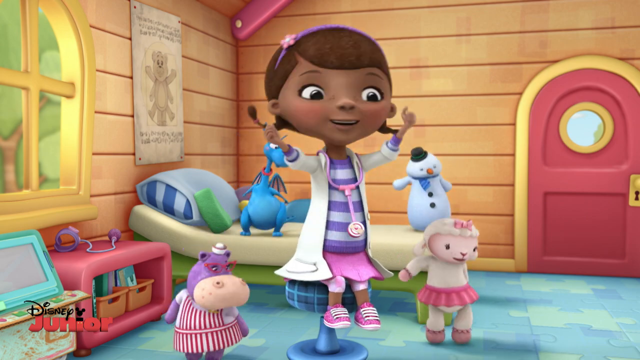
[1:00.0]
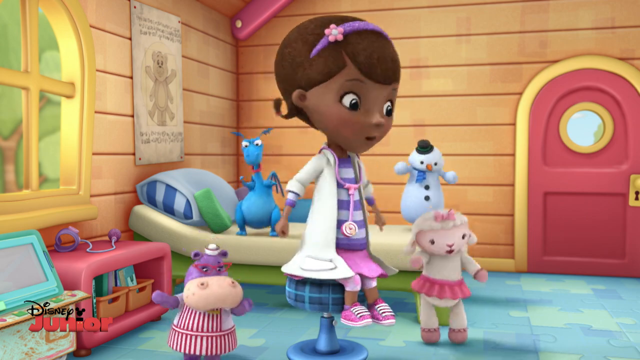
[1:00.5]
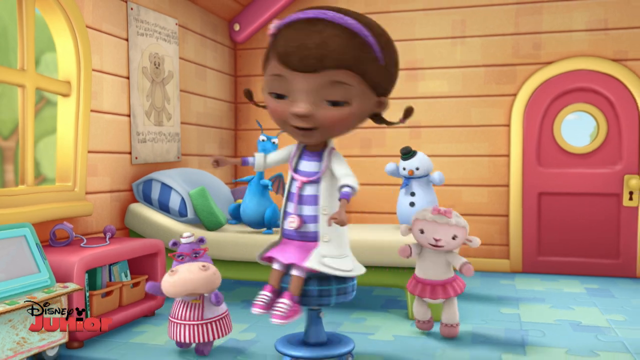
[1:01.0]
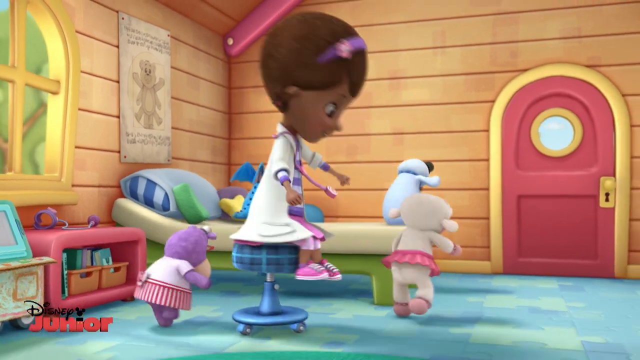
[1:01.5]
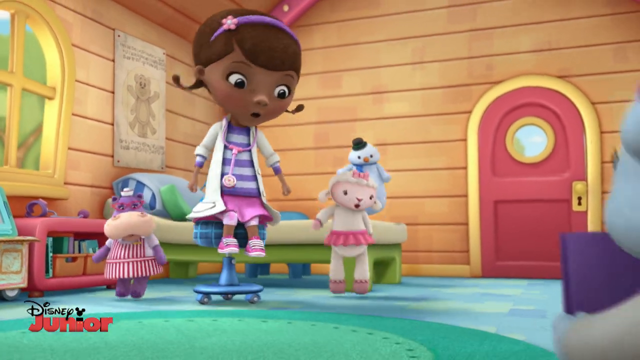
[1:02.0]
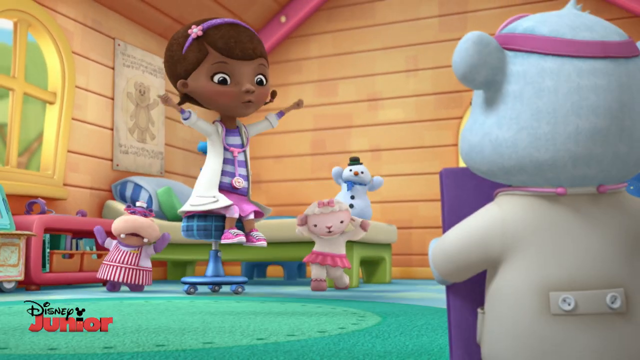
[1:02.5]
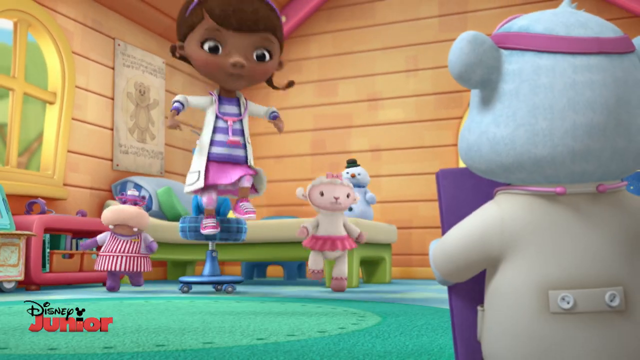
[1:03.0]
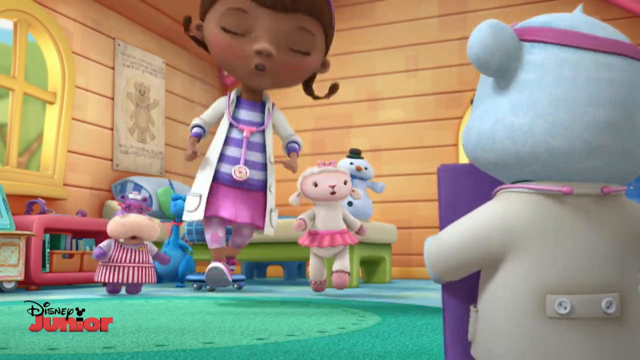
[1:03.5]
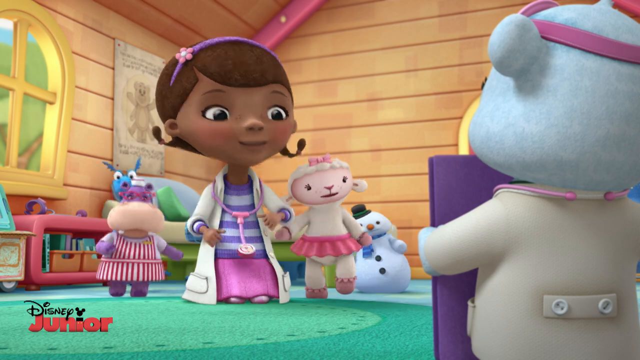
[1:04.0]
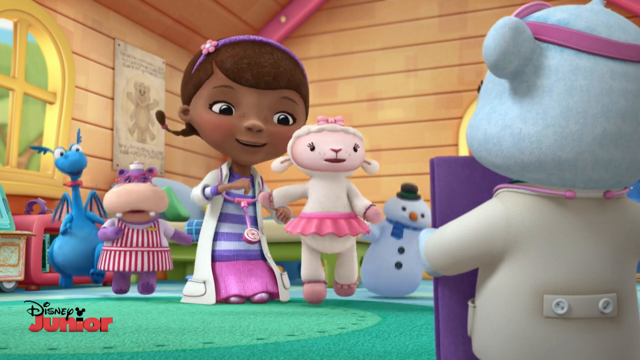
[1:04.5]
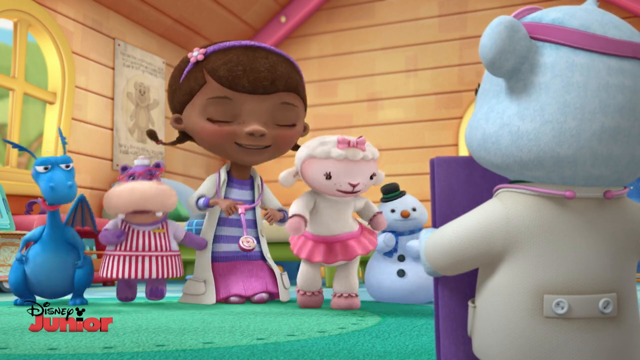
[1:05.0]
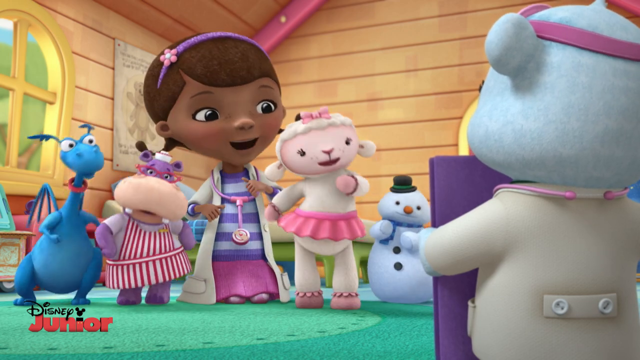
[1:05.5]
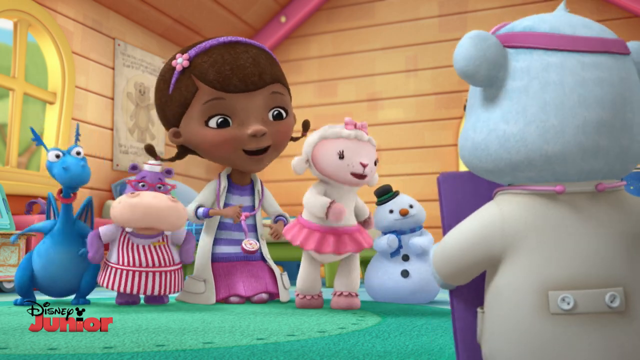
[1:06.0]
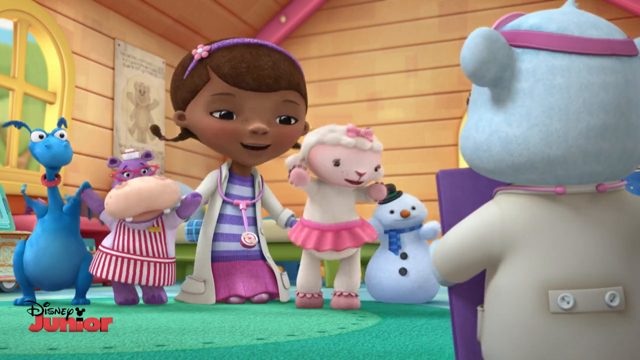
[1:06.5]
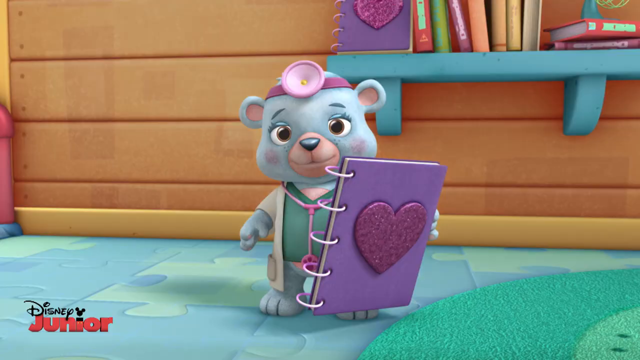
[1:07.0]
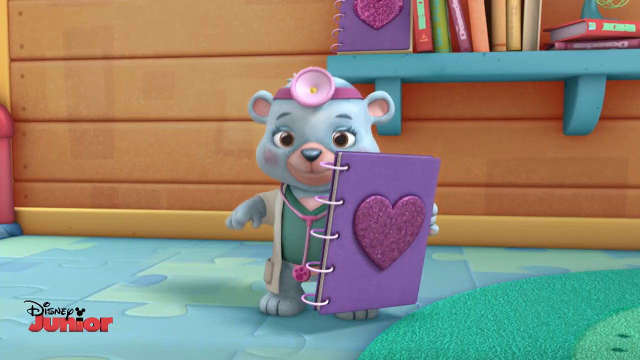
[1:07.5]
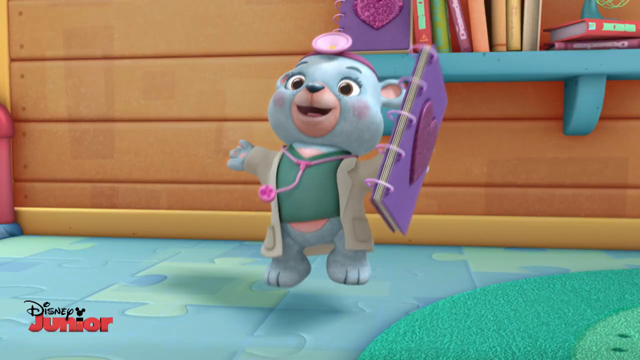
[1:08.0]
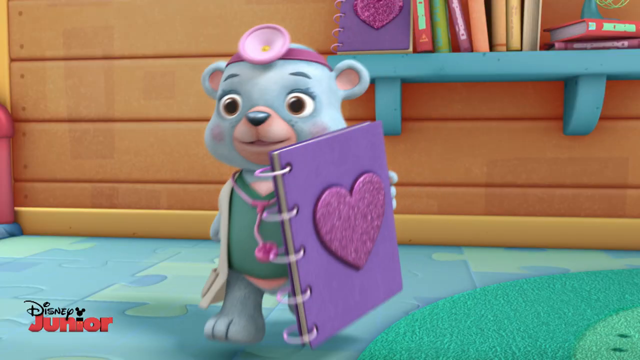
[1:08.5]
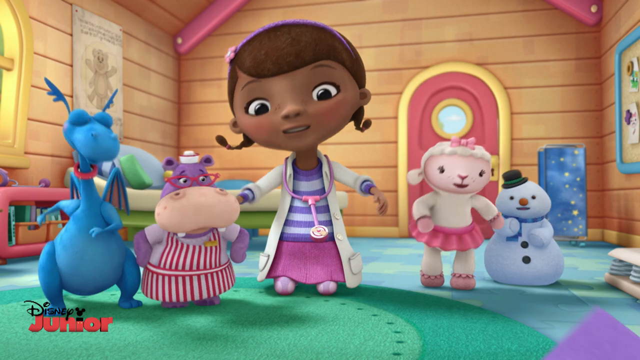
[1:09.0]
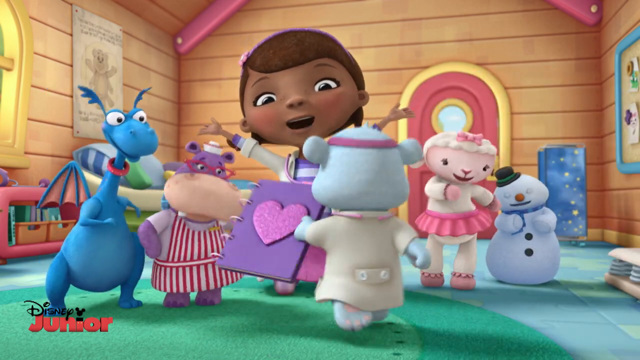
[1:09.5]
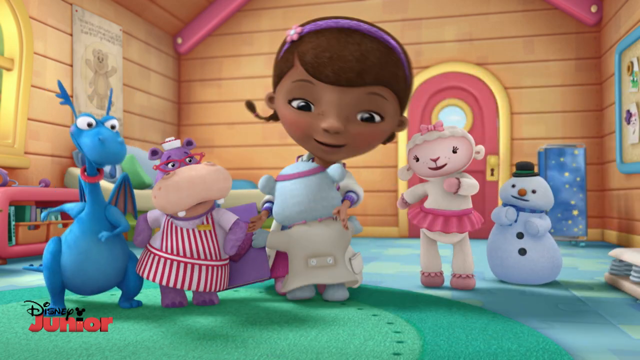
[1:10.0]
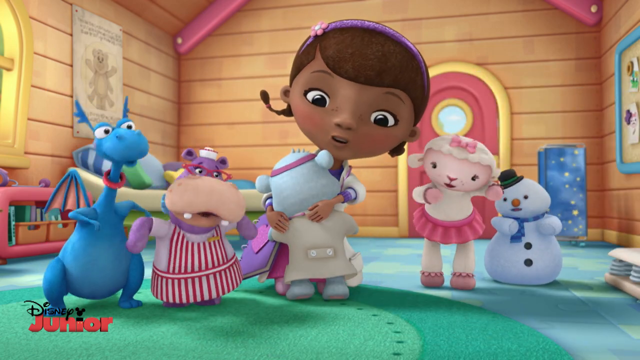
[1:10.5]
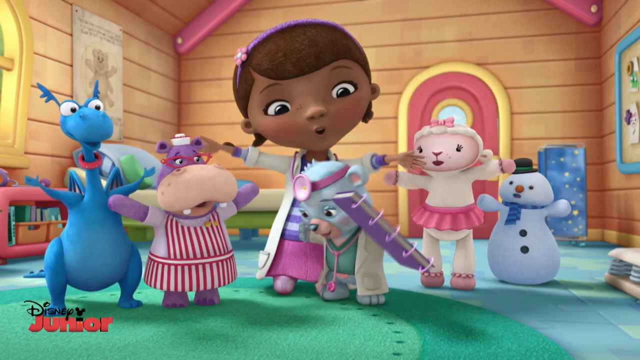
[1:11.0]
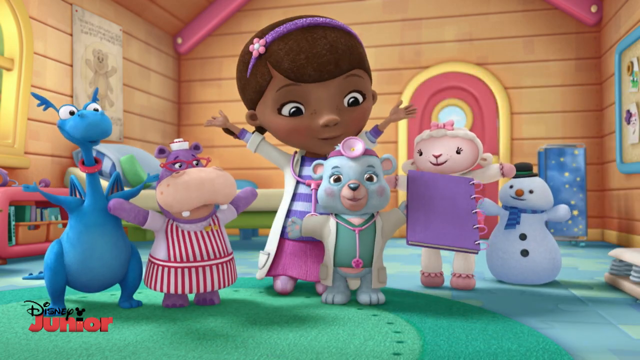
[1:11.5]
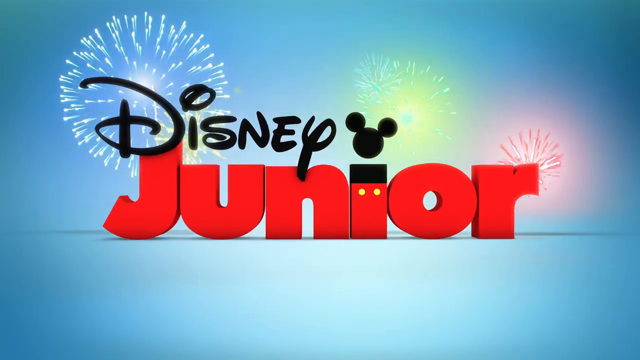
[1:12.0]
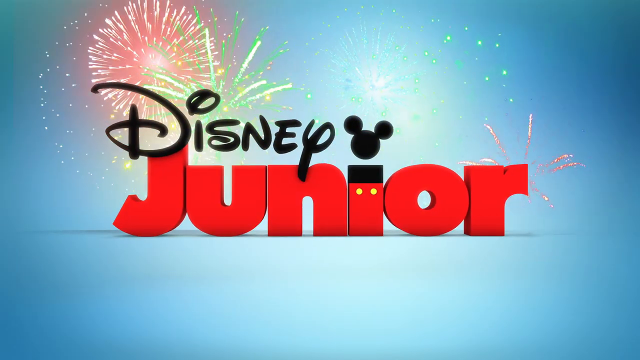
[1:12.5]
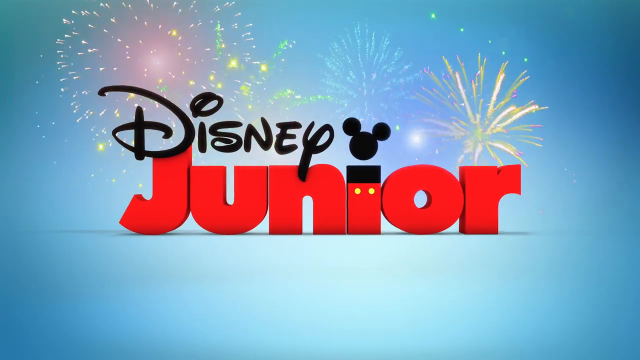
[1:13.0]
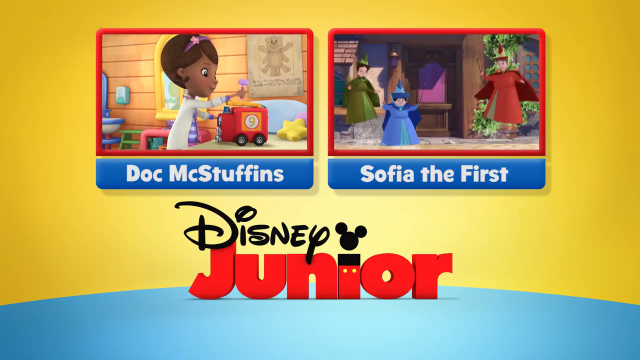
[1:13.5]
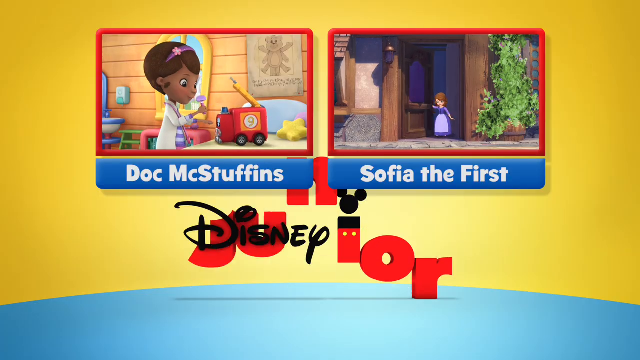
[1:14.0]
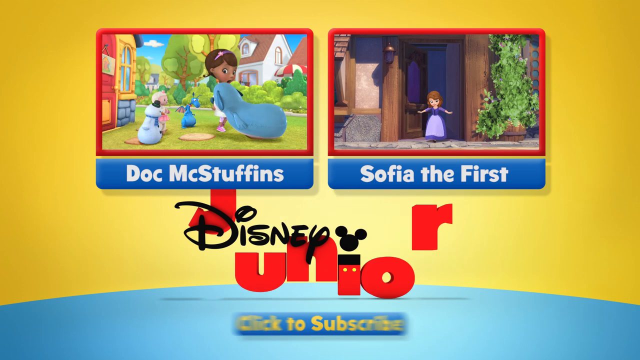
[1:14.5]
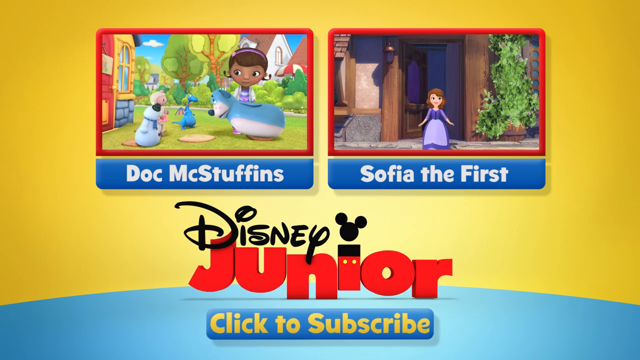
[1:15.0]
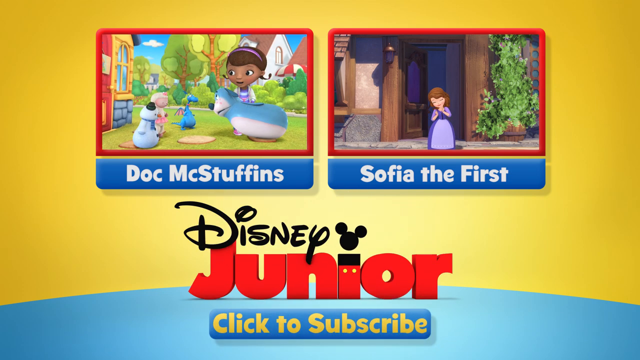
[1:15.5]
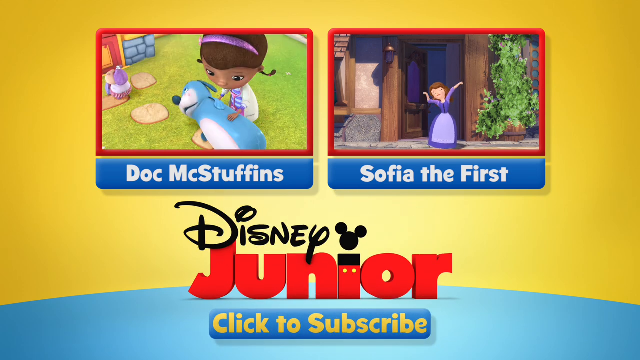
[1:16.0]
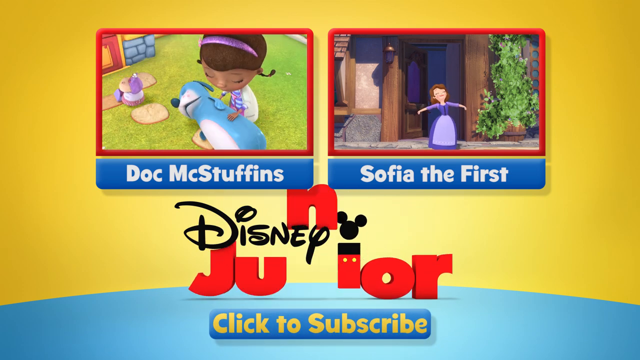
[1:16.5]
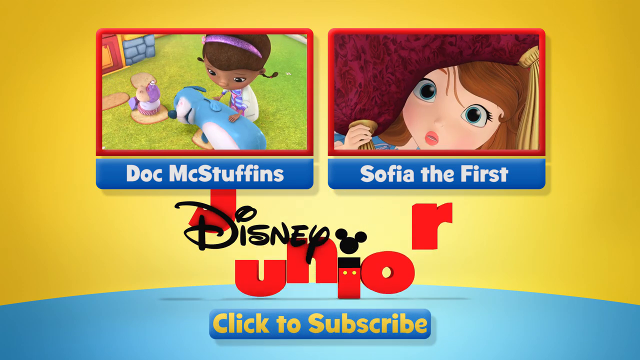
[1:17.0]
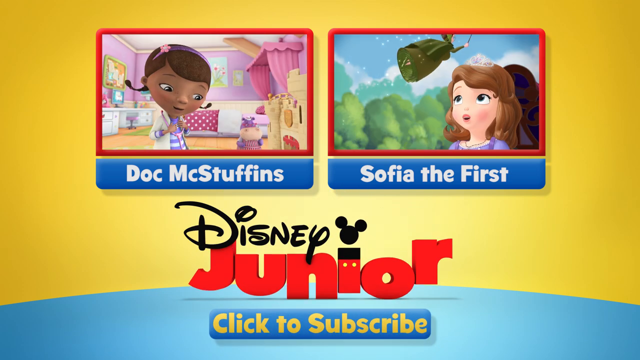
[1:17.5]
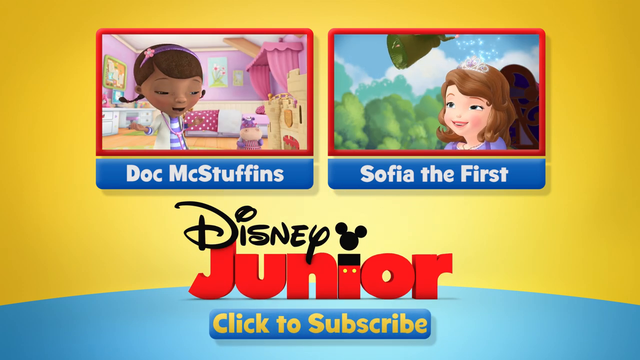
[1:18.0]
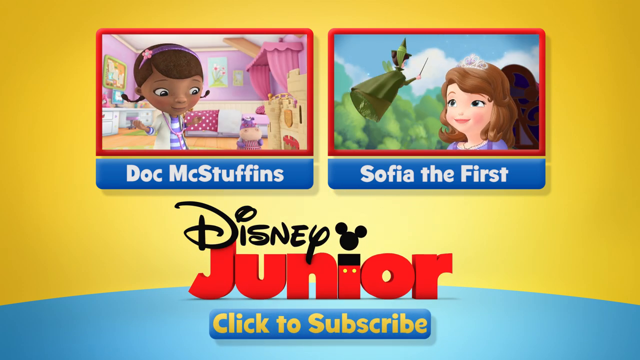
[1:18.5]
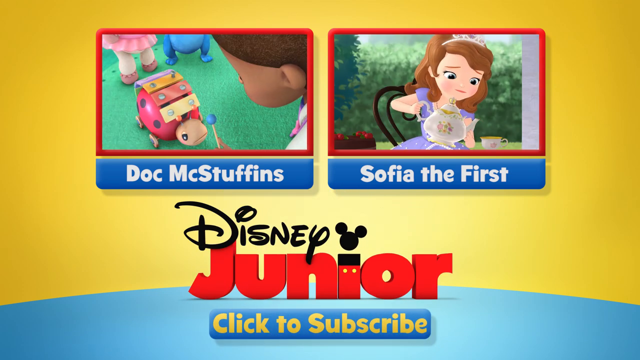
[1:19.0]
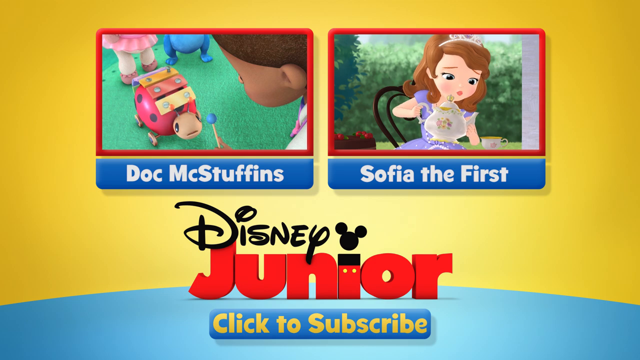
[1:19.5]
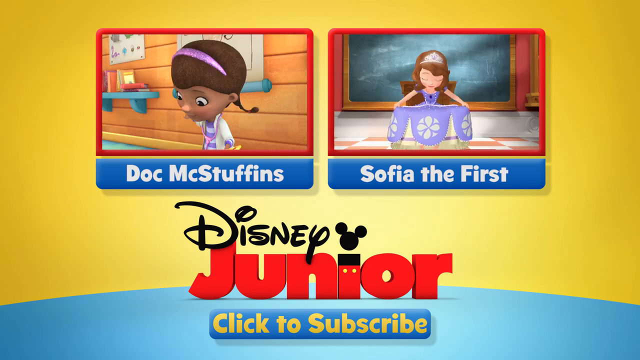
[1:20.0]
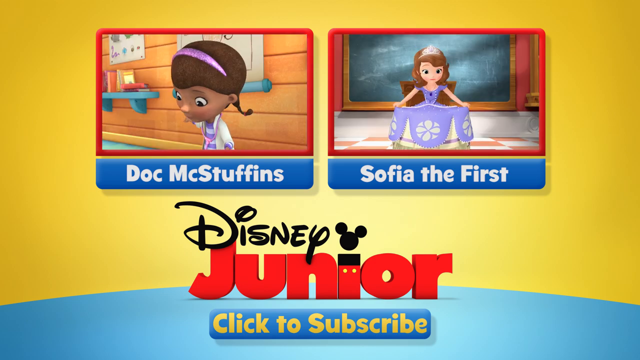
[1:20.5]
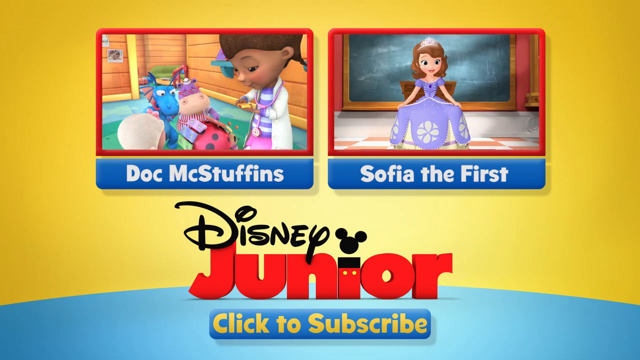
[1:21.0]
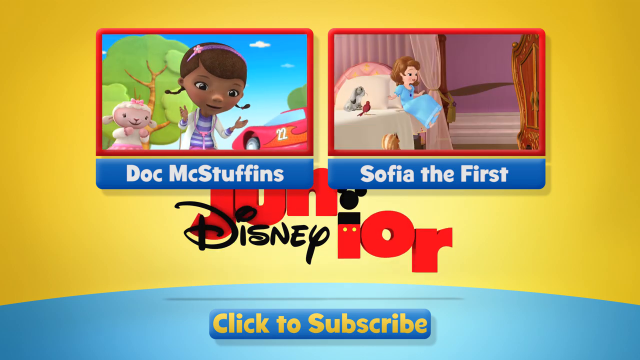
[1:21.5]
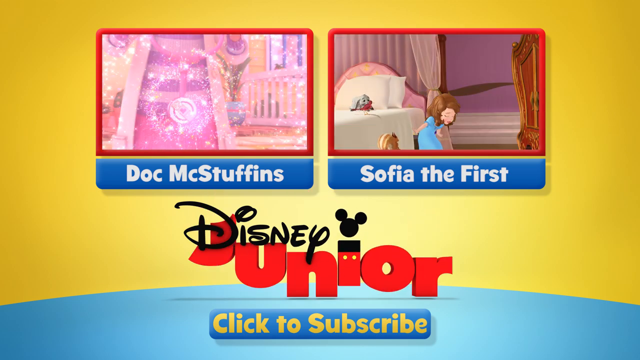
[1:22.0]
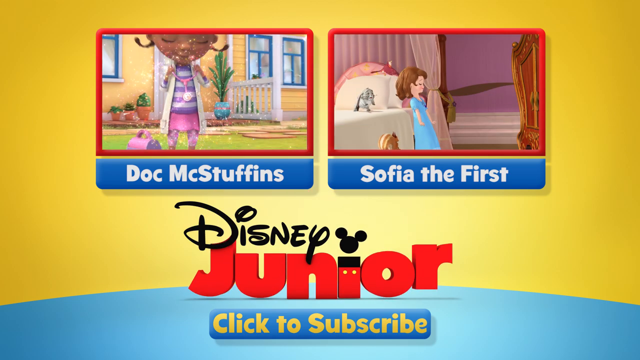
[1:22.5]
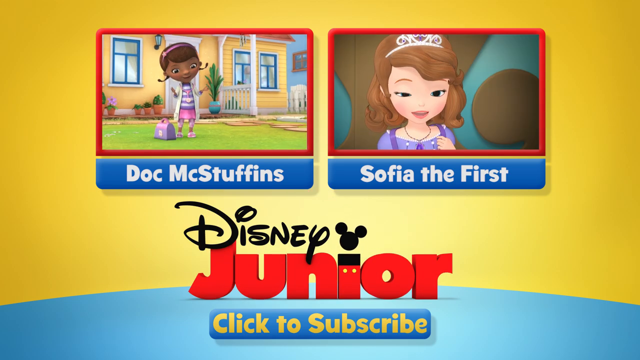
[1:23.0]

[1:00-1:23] She turns to the left as her arms swing back, spins to the right, lifts her arms, and swings them forward and then out to the side. She hops to the ground and gets on her knees facing the doctor, who carries the purple heart notebook. The other characters stand aligned next to her in a line, and they all swing left to right, moving their arms. She raises her hands, singing along. The doctor leans forward, jumps, and, holding the notebook in his left hand, hops forward and gives her a hug. She hugs him, and they all raise their hands as she looks down at him. The scene cuts to the blue screen with the fireworks and the Disney Junior logo, then to a yellow screen with two embedded videos: one for Doc McStuffins, showing the scenes seen earlier, and one for Sophia the First, where a girl in an apron stands in front of a very tall doorway. The letters for "jr." bounce up and down and land, bouncing as they land on a reflective blue counter.